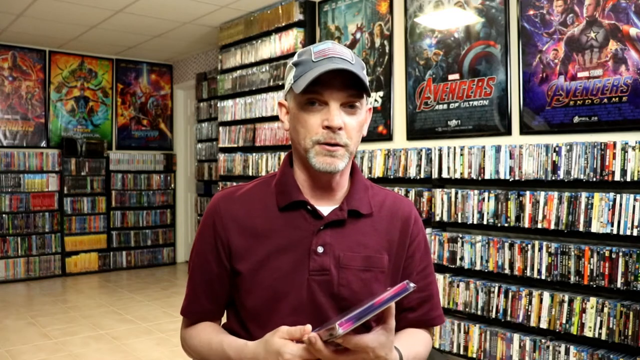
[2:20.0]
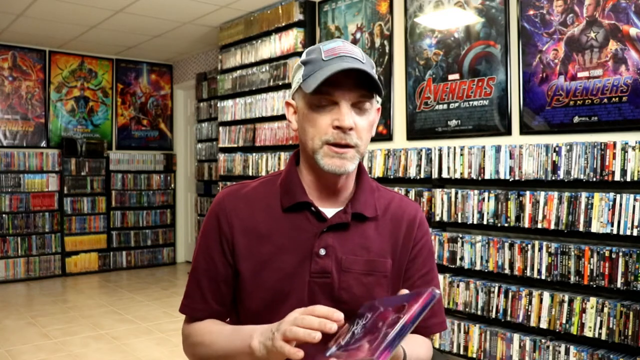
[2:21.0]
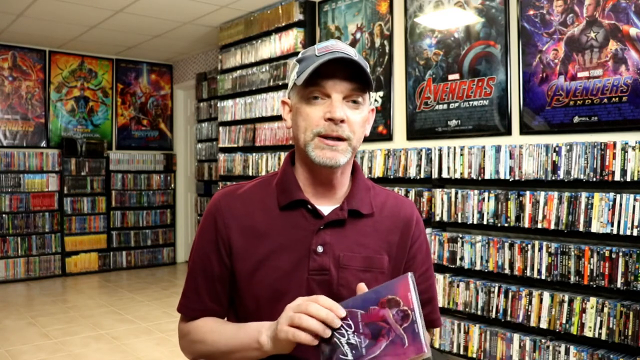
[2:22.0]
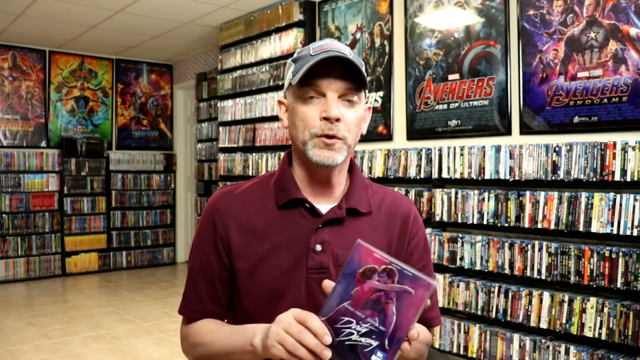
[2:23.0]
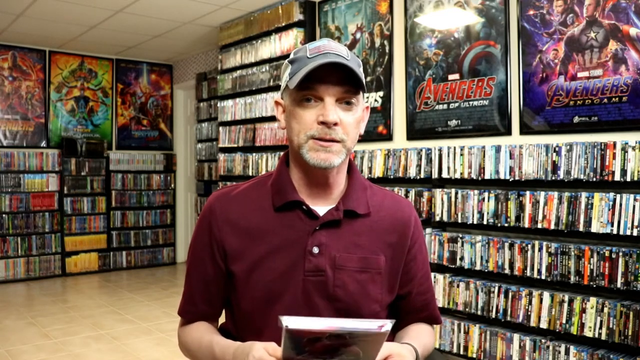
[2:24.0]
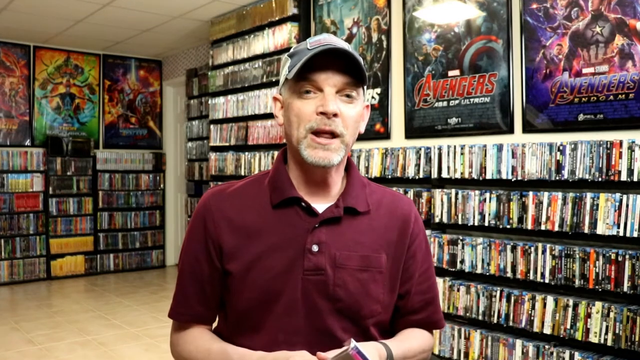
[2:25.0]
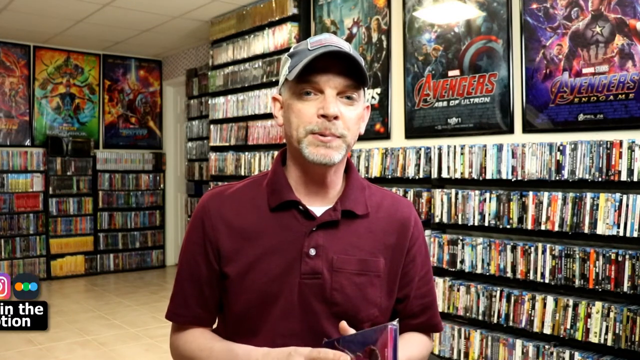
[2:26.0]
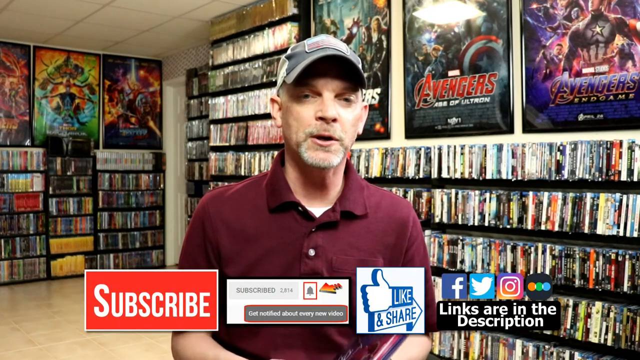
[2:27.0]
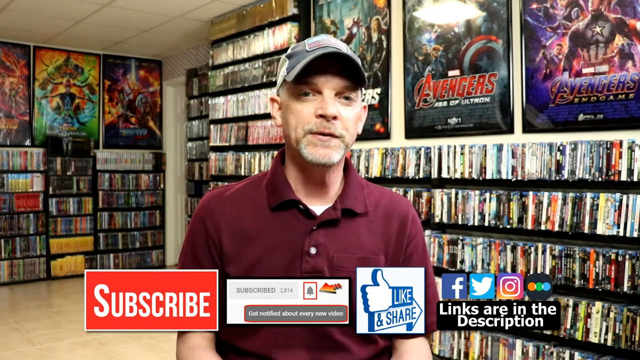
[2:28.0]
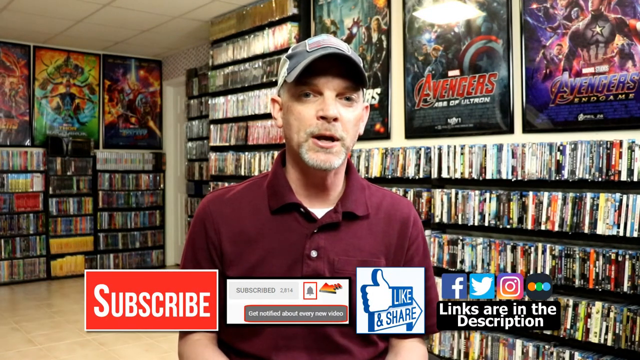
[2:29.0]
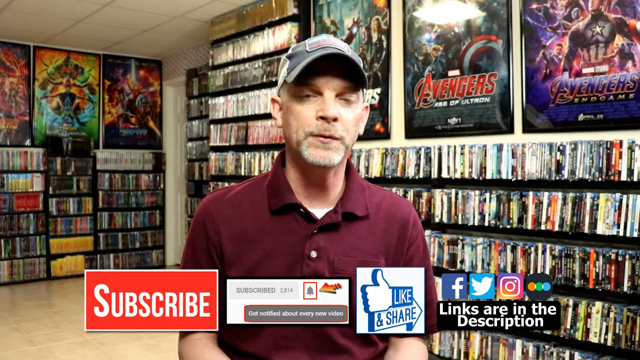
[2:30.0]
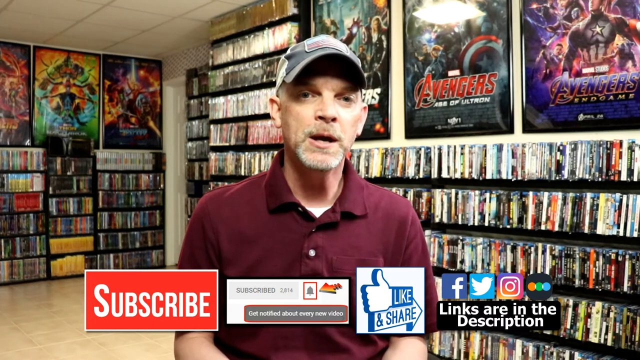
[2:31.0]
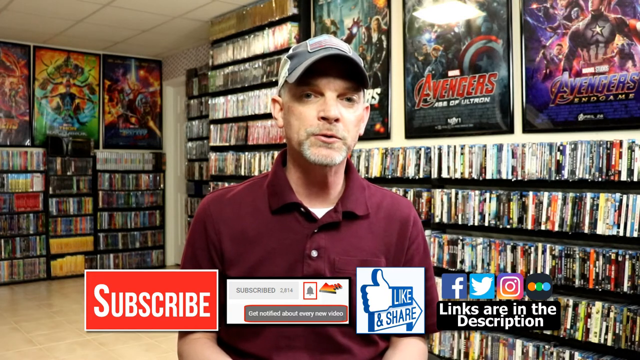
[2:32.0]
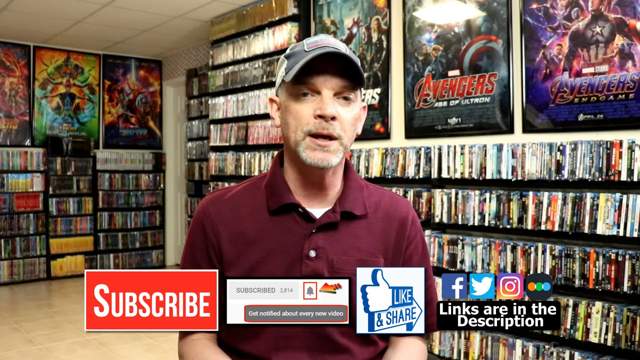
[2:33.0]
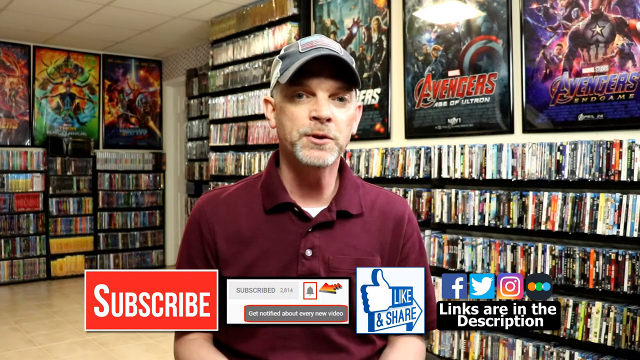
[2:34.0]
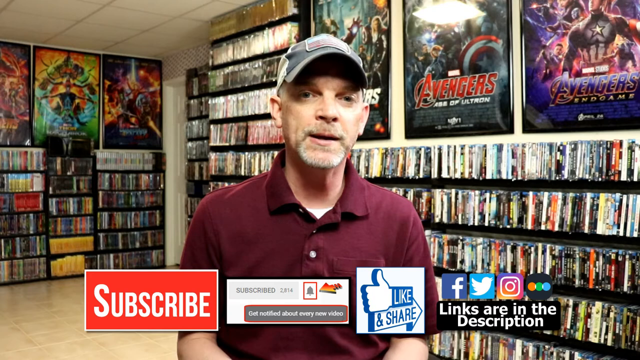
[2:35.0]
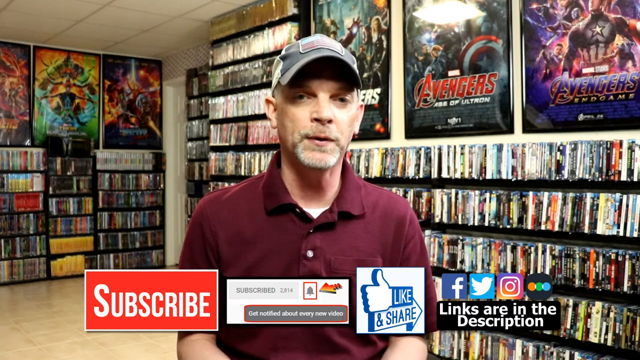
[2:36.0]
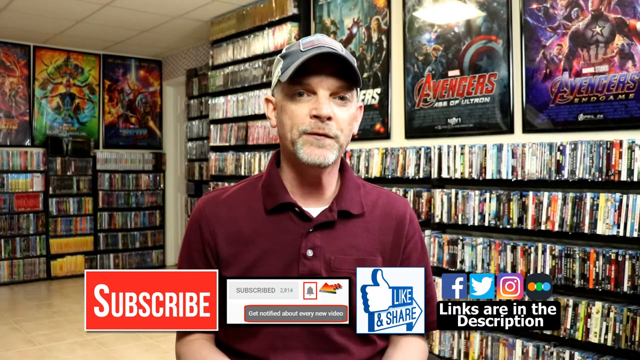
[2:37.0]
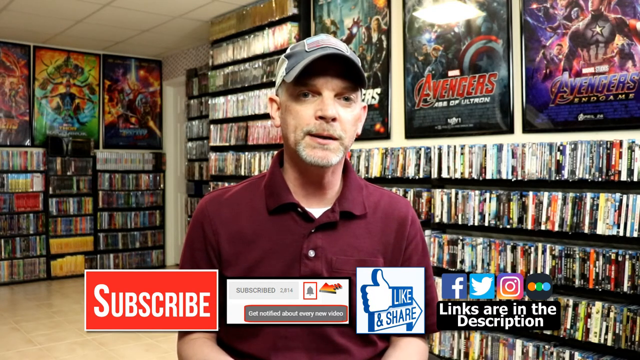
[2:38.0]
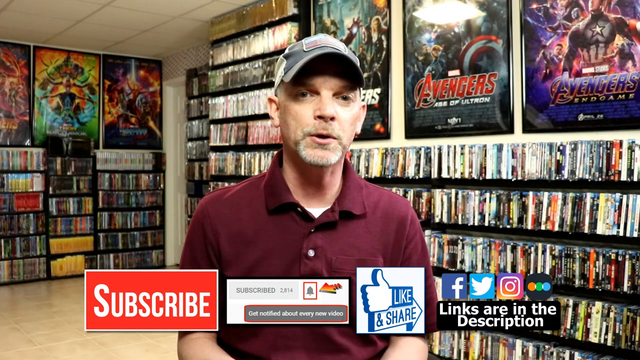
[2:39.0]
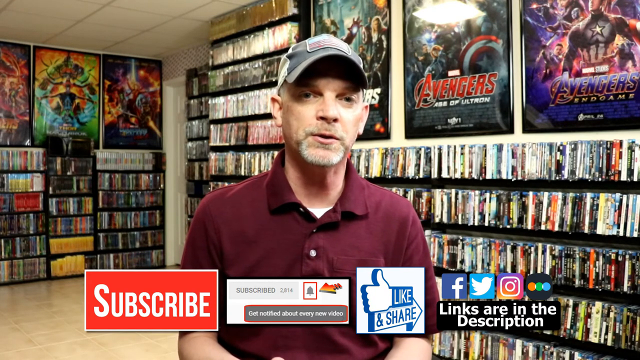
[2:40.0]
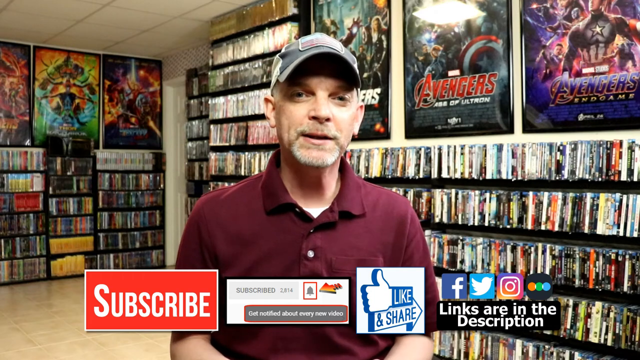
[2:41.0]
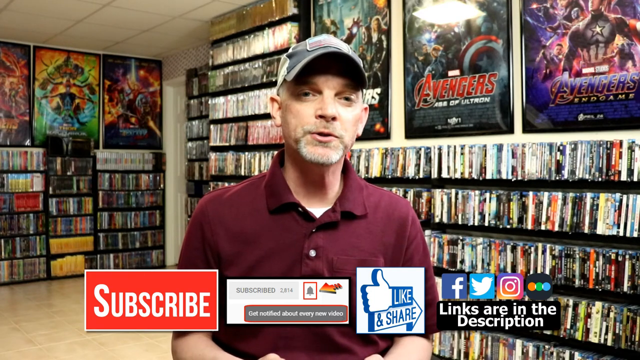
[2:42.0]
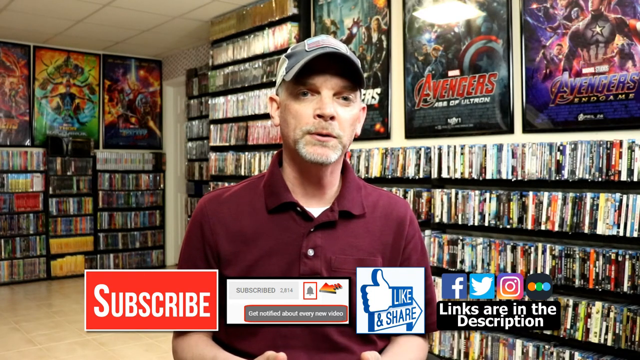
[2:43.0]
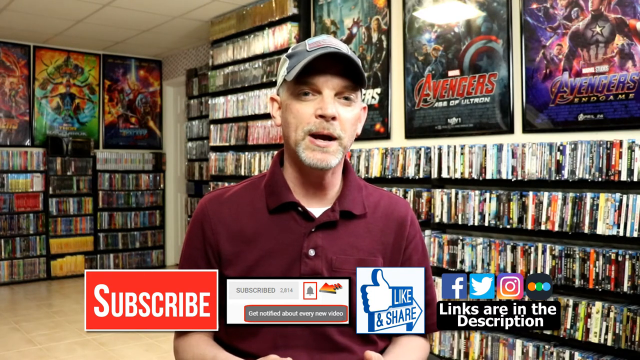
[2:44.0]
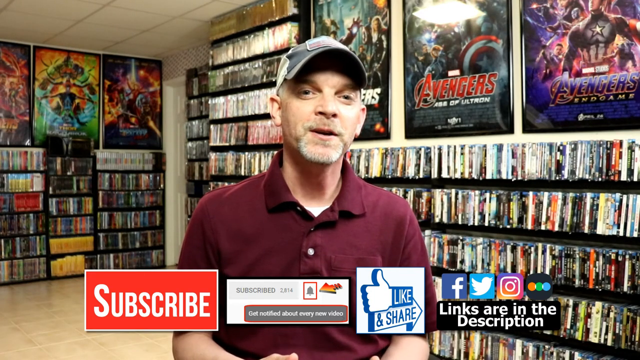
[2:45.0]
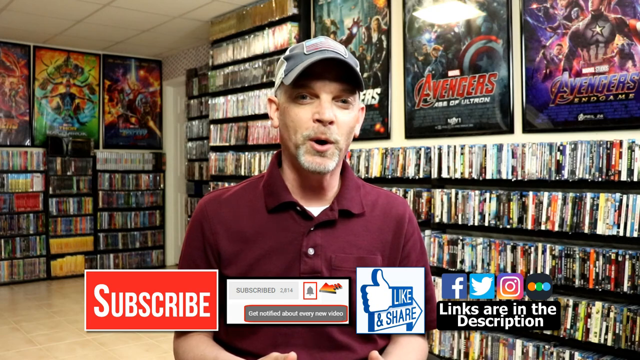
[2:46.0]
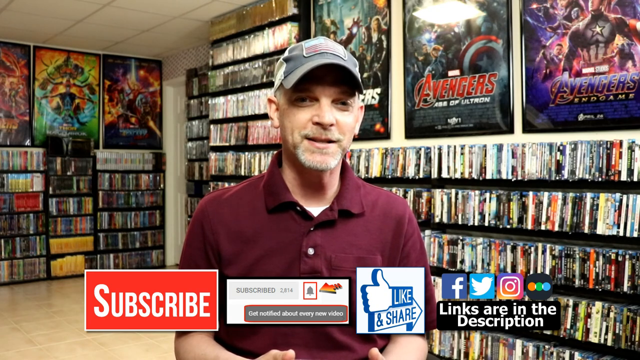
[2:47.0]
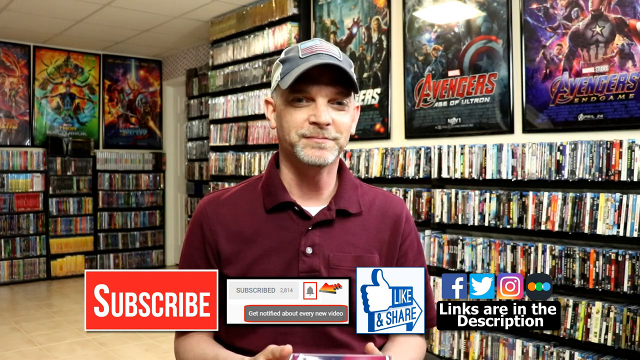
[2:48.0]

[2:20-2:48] The man continues talking and wobbles the case a bit, then turns it slightly to the side and back around to the front for the camera. Talking with emphasis, he is no longer focused on showing the movie; instead, a graphic design at the bottom advertises subscribing to his channel, liking, sharing and following him on social media such as Facebook, Twitter, Instagram and another website. He keeps talking to the camera while these reminders appear, and the video ends there.